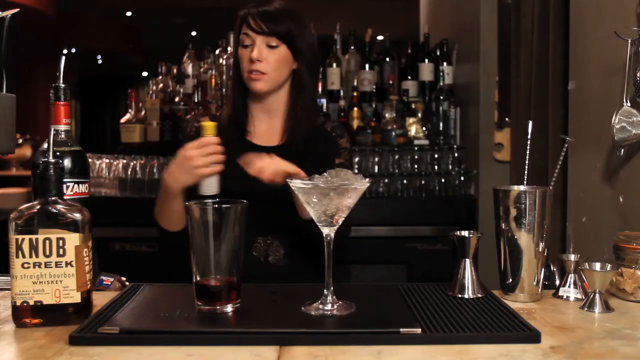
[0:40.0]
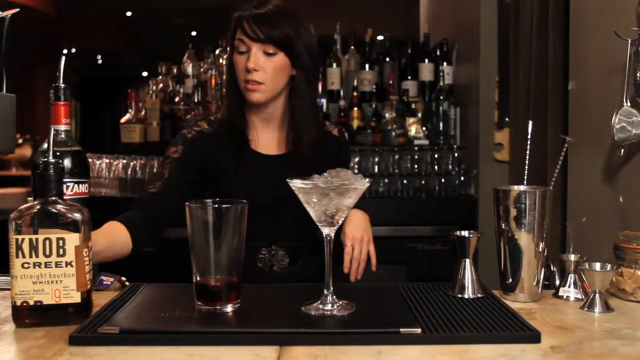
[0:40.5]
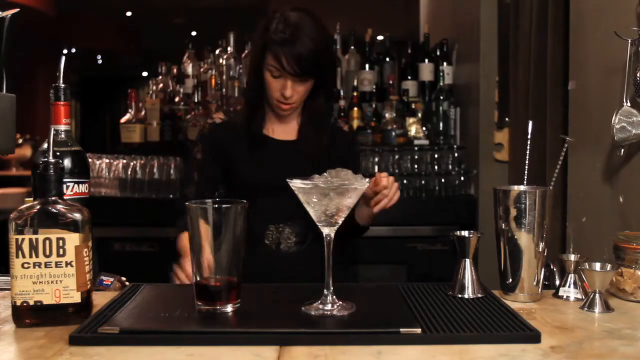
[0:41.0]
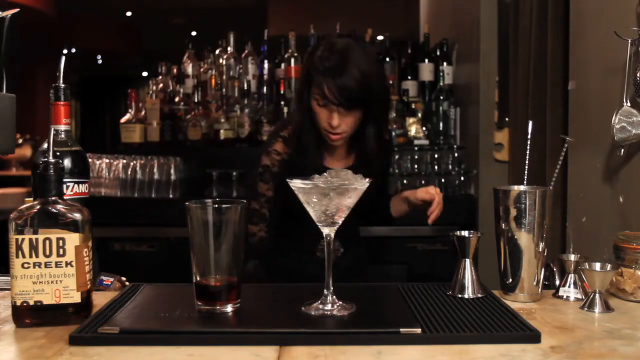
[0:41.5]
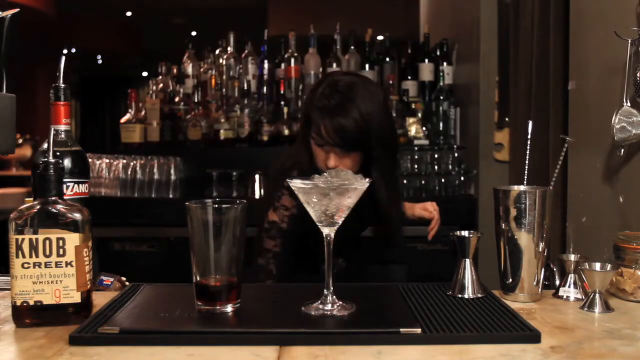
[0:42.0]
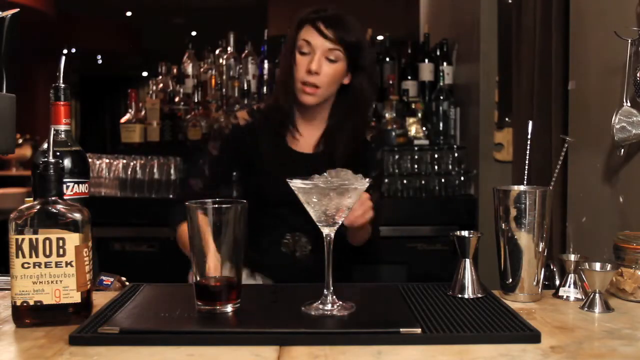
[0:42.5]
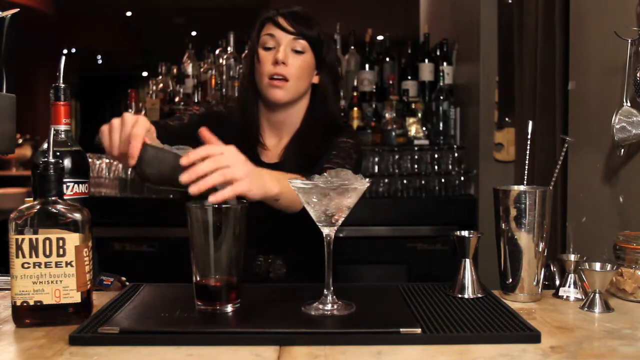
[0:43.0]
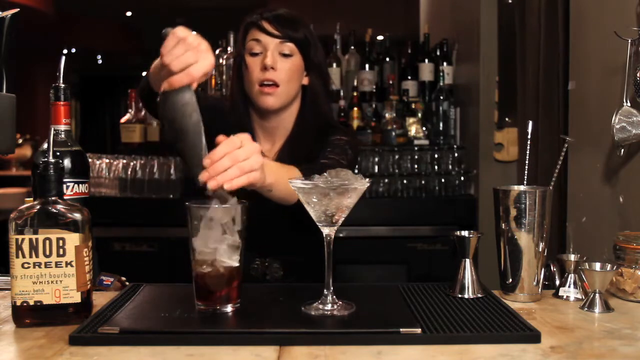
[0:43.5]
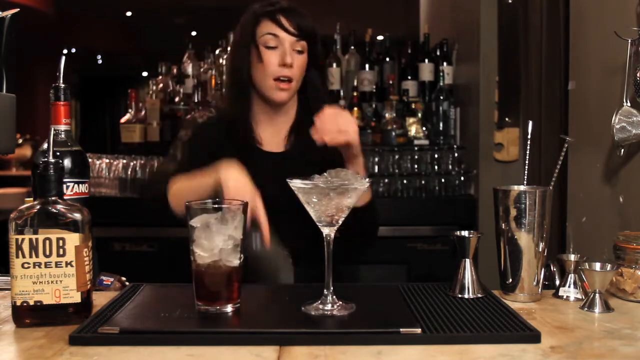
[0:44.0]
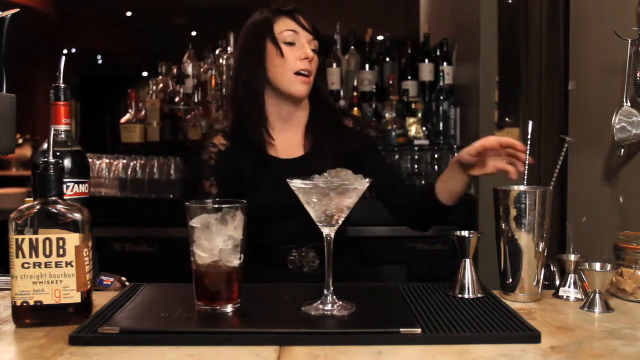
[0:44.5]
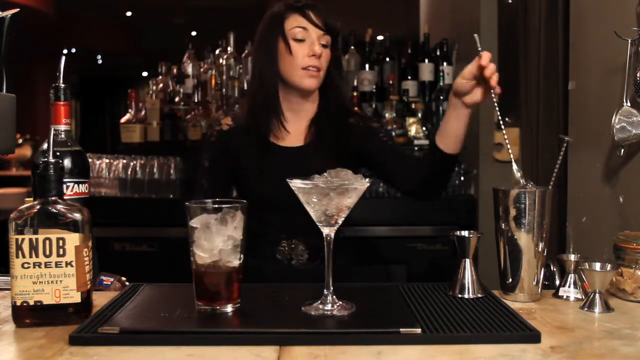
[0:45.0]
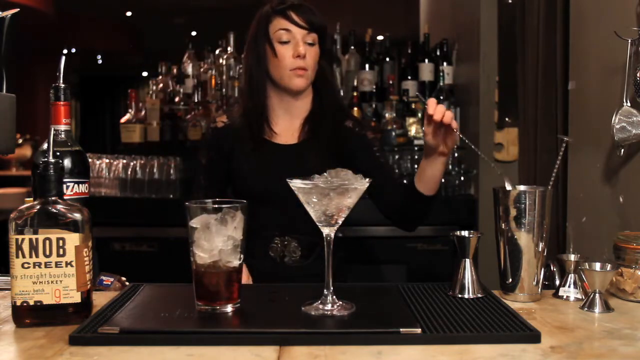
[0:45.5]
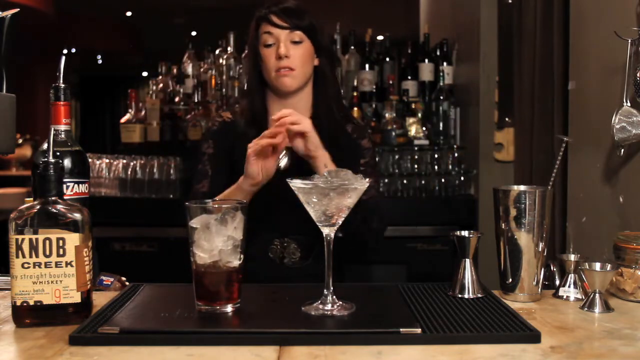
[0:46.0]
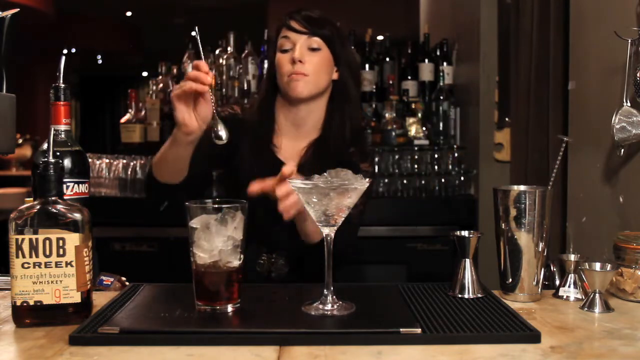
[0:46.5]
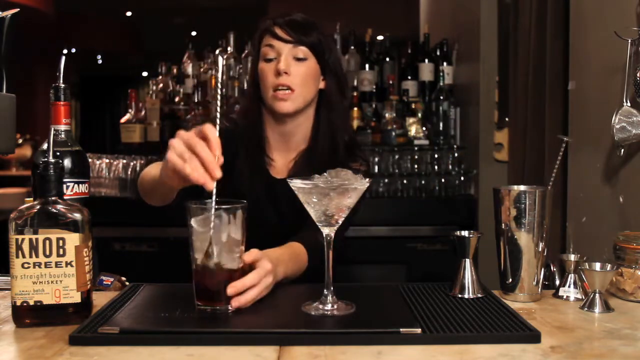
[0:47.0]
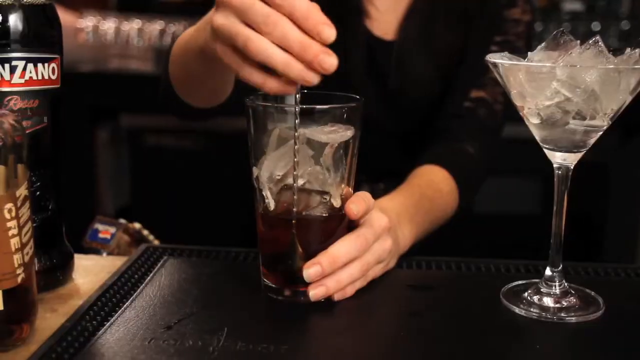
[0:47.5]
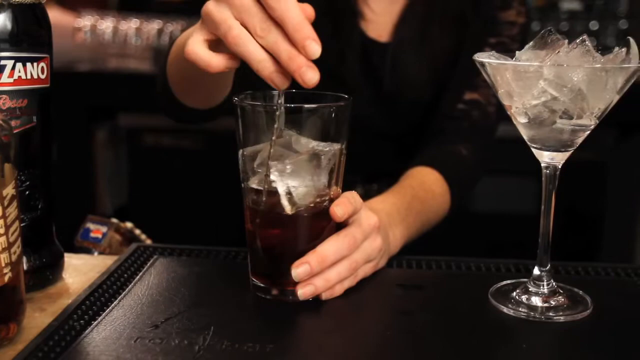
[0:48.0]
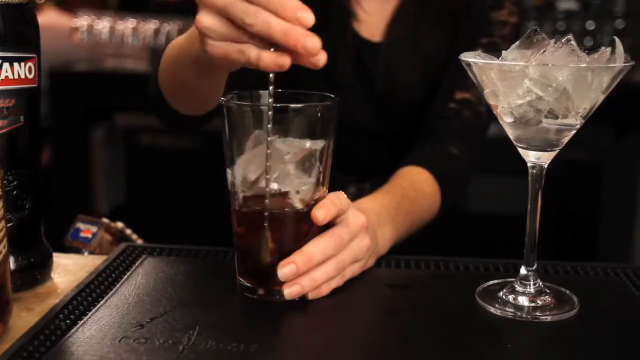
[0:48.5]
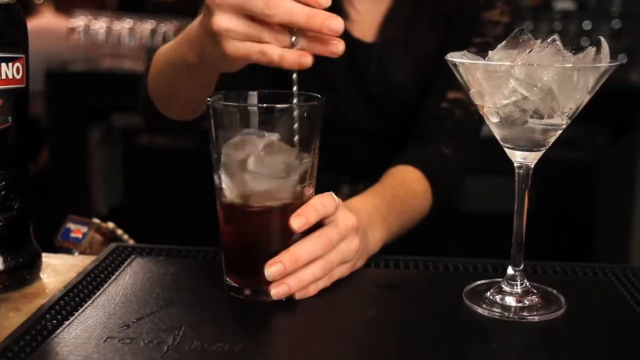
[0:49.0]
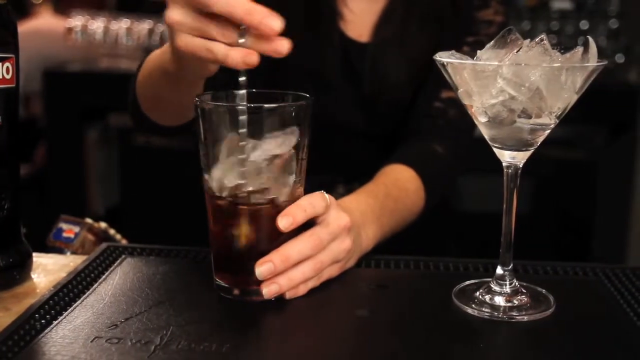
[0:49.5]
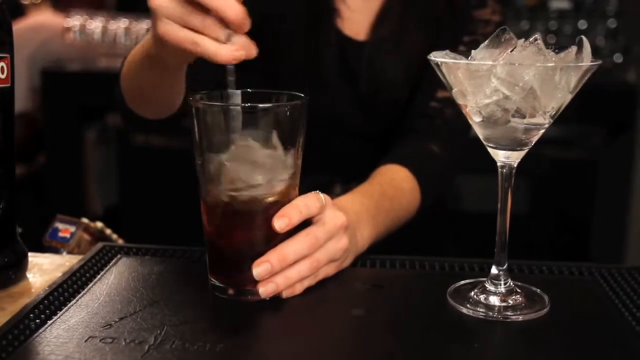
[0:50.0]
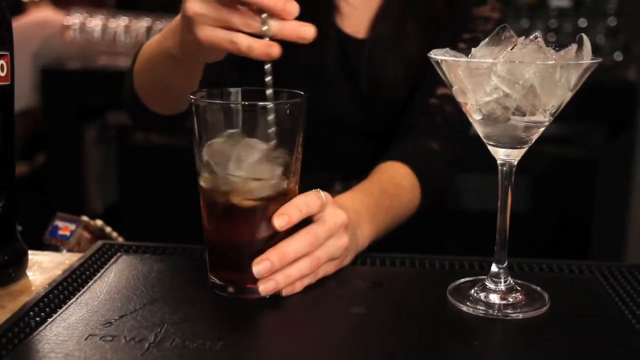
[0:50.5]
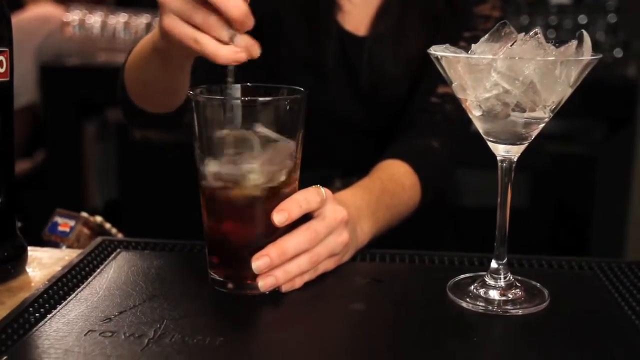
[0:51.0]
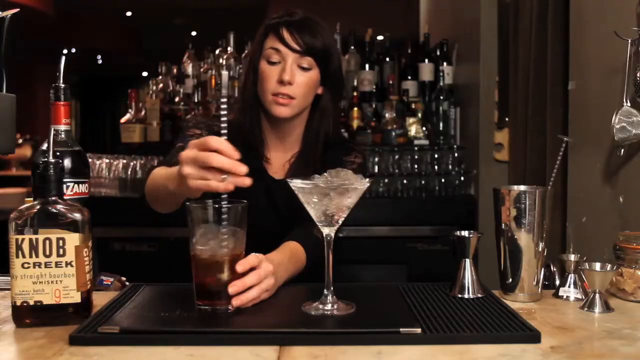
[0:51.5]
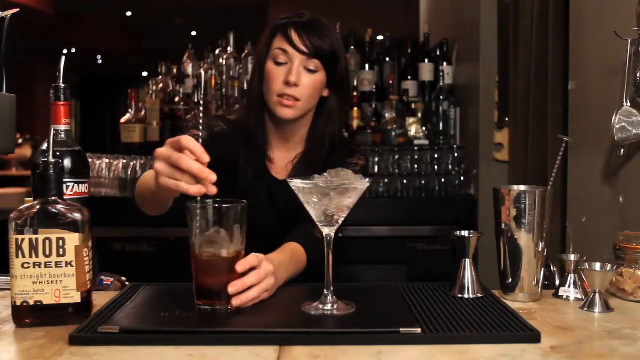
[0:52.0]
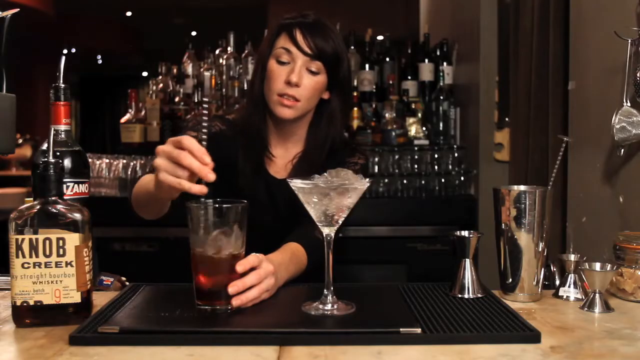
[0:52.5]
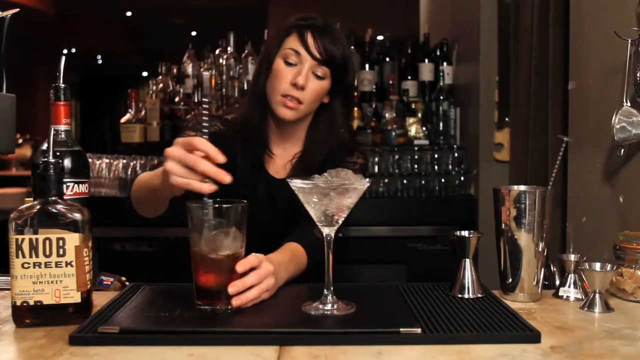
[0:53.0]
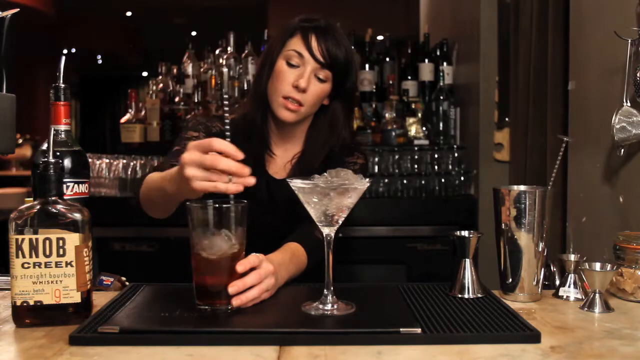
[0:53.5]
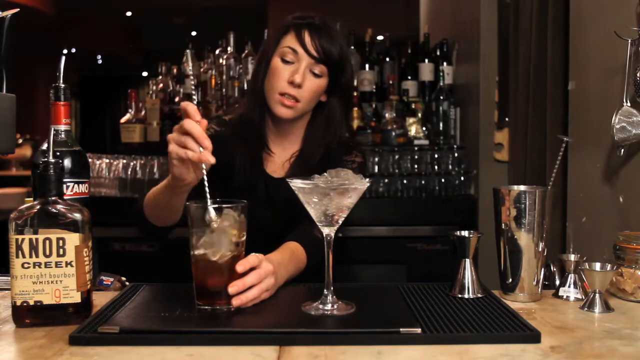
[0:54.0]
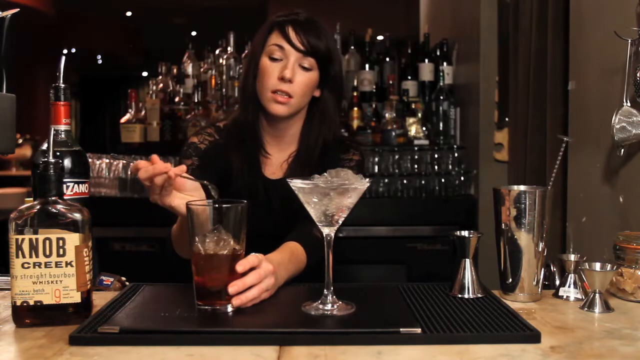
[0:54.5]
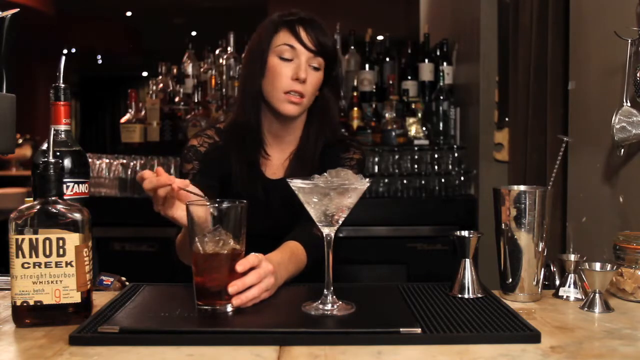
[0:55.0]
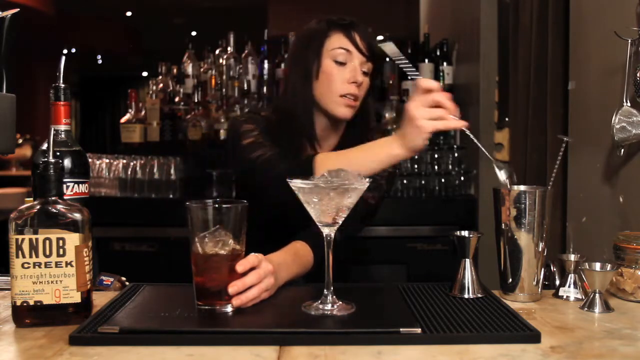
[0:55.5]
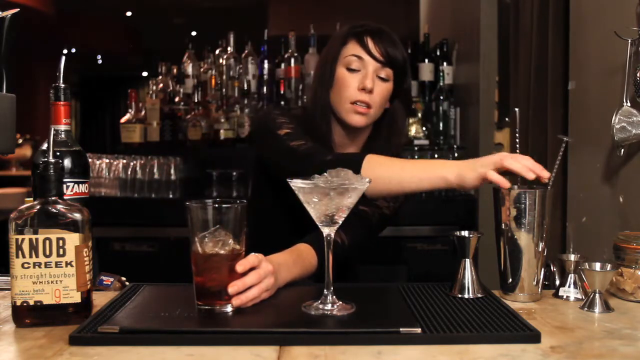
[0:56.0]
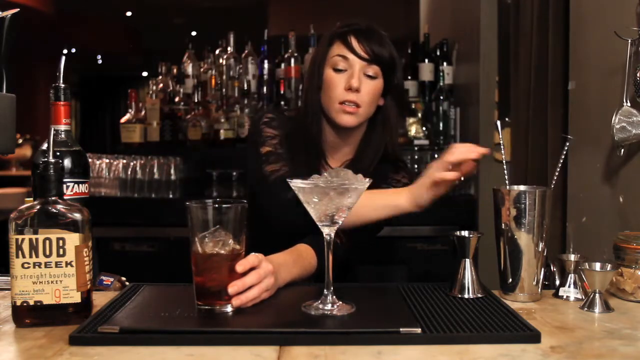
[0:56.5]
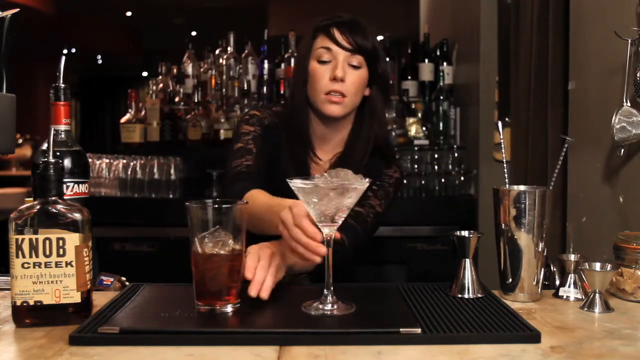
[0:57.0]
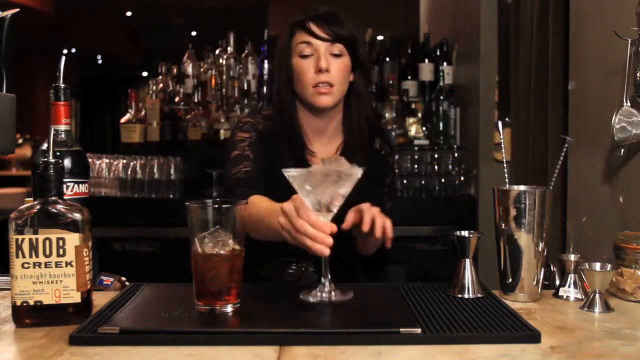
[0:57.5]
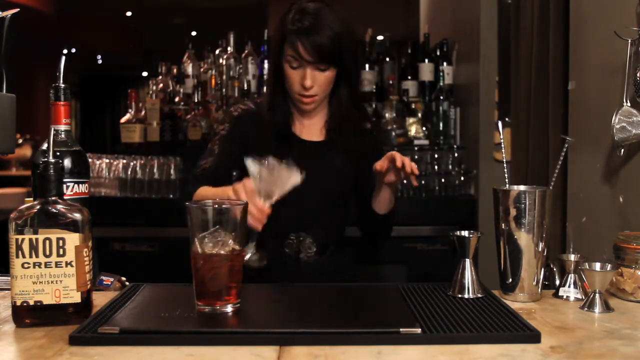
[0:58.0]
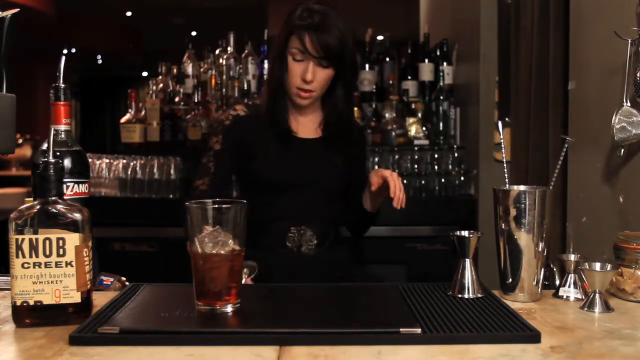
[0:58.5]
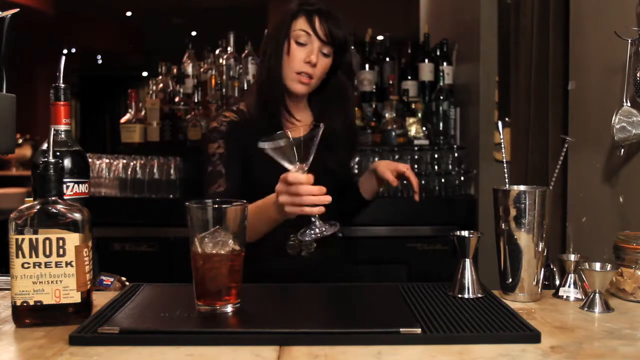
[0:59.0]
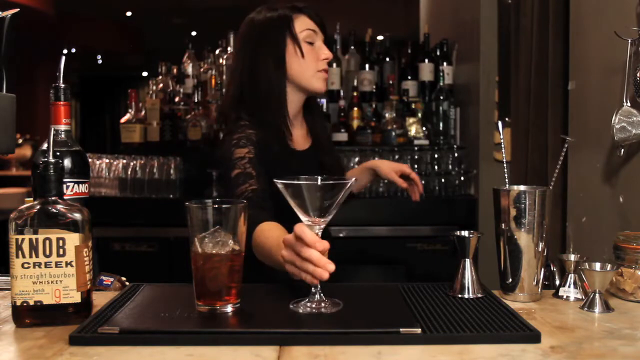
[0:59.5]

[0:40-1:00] The woman reaches down for something, likely scooping up ice from behind the counter with her right hand. She comes up with a metal scoop filled with ice and puts it into the glass on top of the liquid she just poured. She then grabs what looks like a device to stir from the right side, where a metal cup holds two metal rods. She takes one of them, sticks it into the cup, and stirs the ice with the liquid quickly; the ice almost begins to melt down. She puts the stirrer back to the side into the tin. She then empties what was in the martini glass.